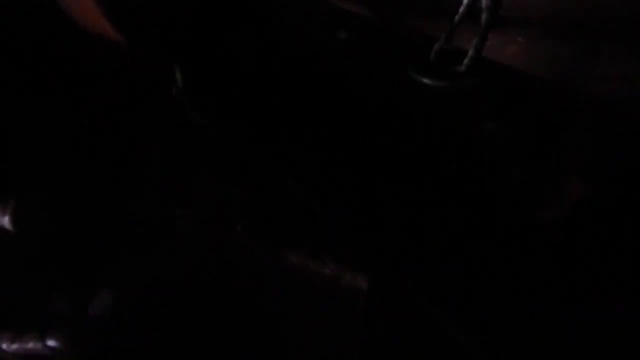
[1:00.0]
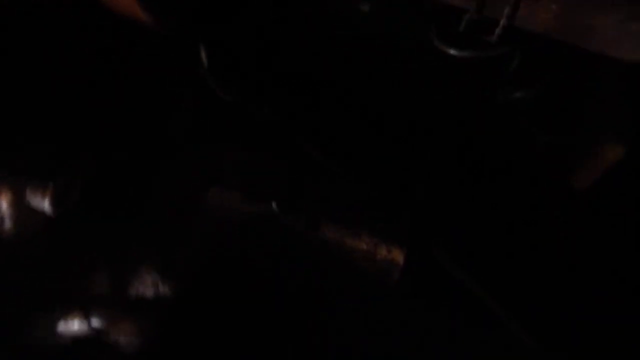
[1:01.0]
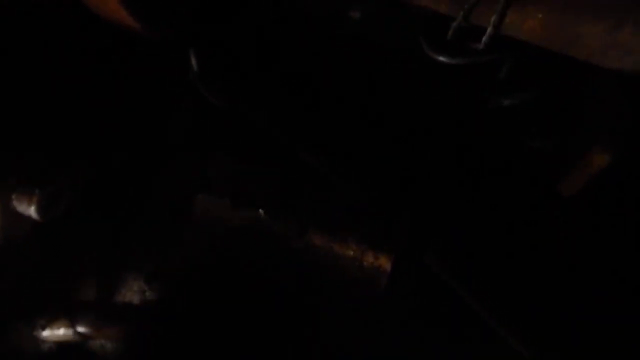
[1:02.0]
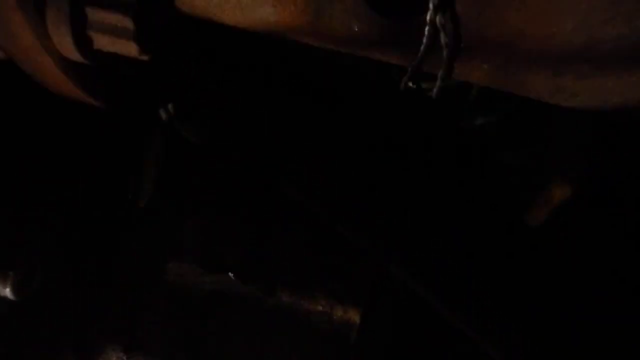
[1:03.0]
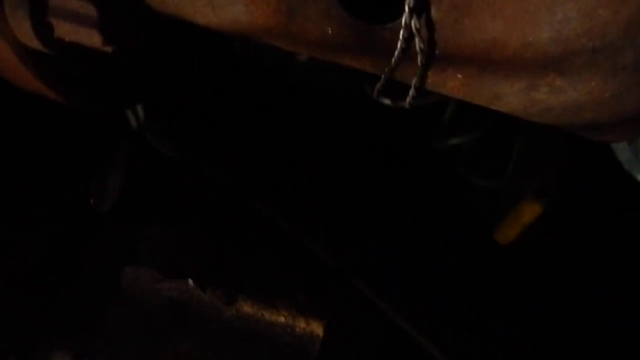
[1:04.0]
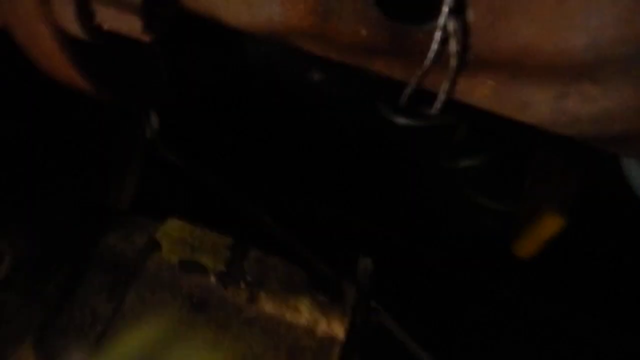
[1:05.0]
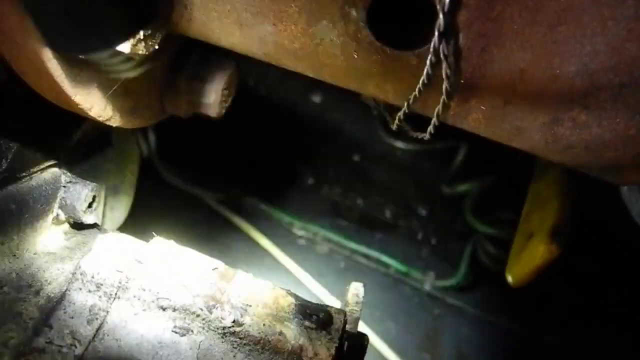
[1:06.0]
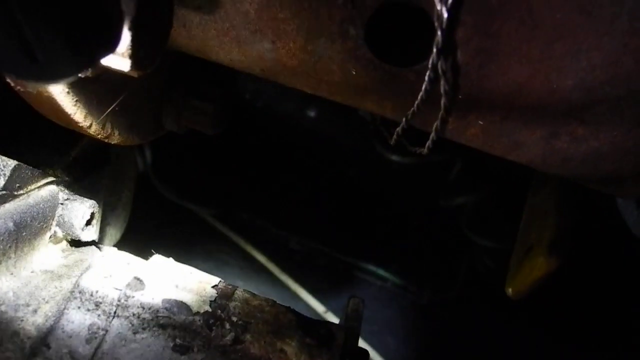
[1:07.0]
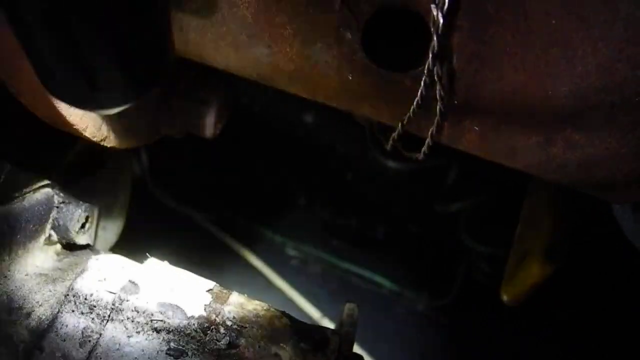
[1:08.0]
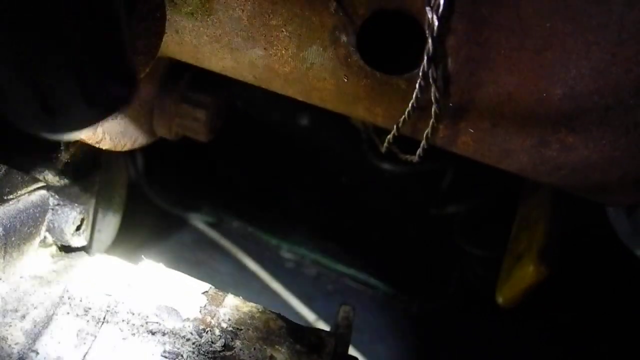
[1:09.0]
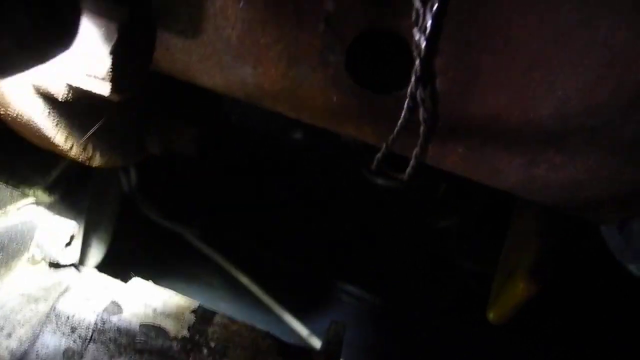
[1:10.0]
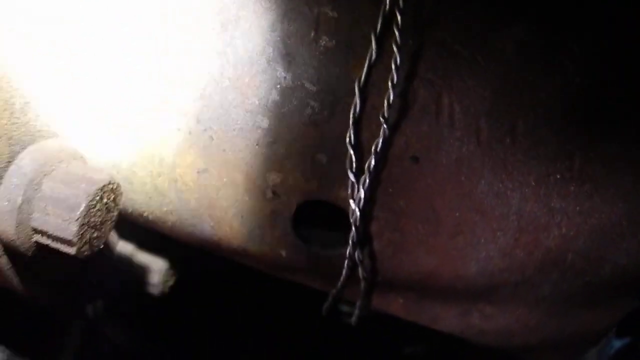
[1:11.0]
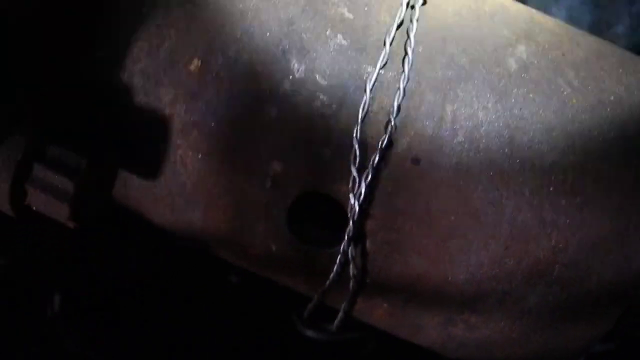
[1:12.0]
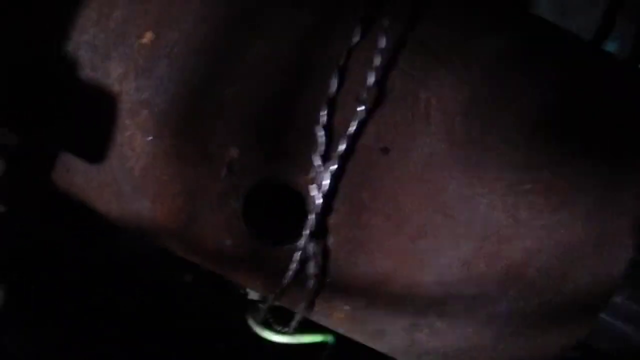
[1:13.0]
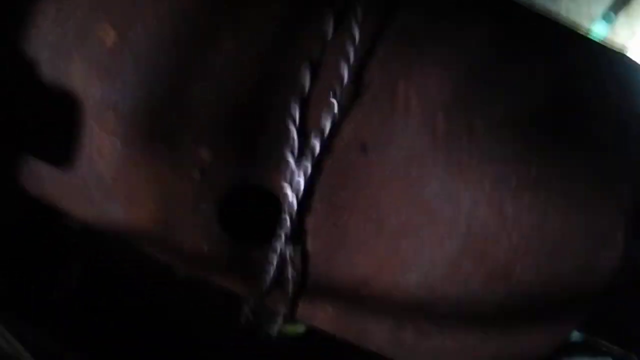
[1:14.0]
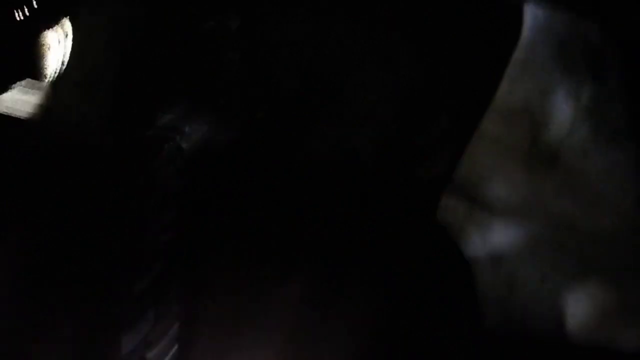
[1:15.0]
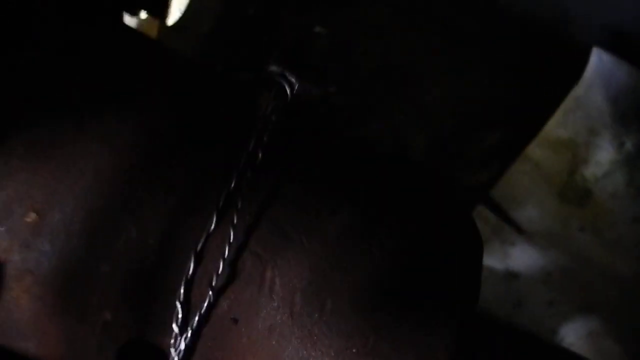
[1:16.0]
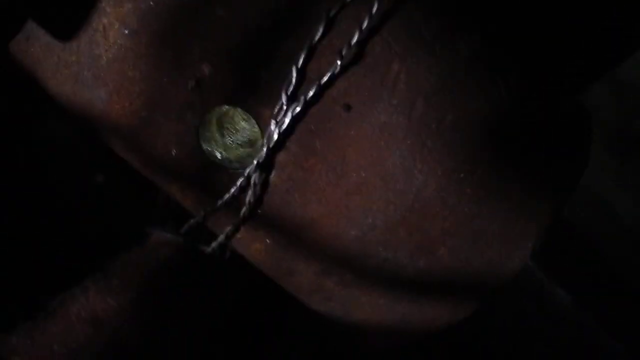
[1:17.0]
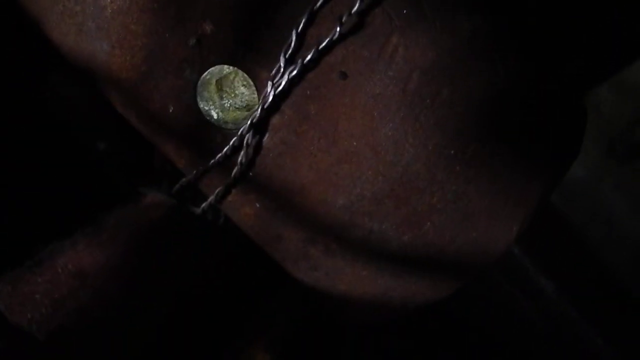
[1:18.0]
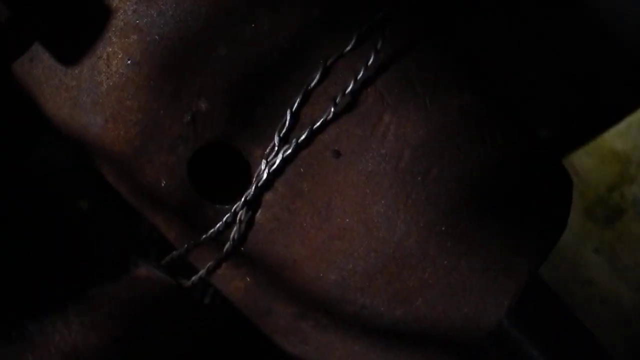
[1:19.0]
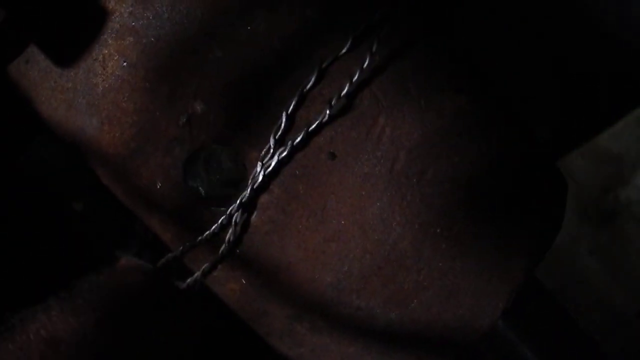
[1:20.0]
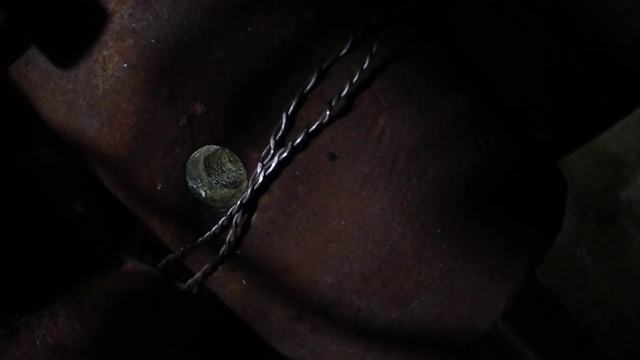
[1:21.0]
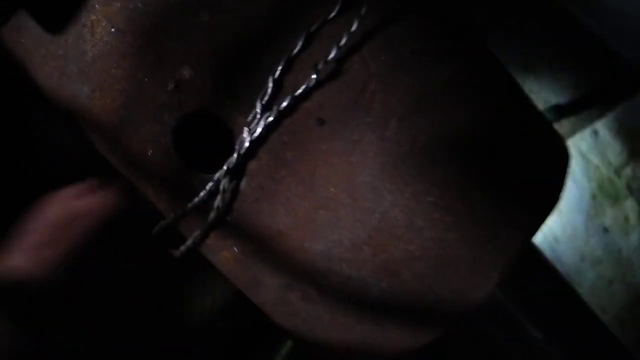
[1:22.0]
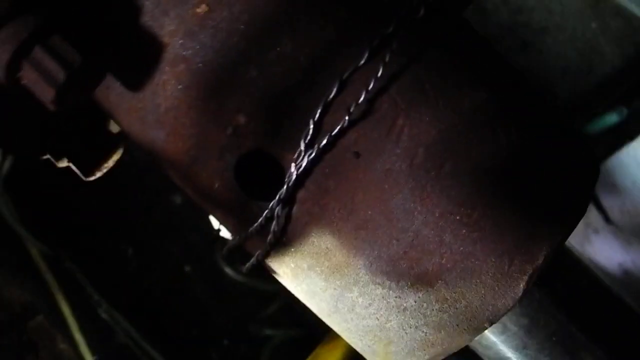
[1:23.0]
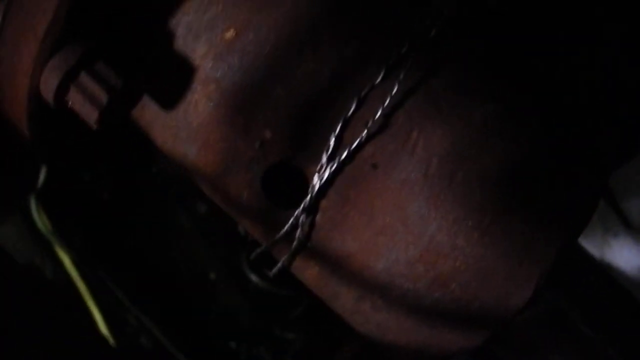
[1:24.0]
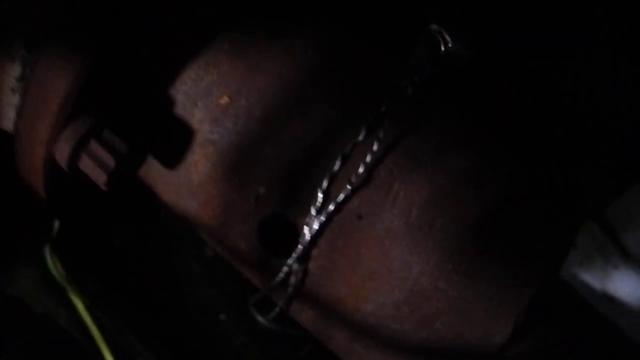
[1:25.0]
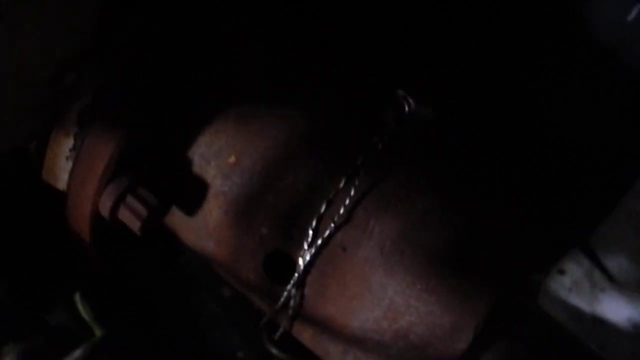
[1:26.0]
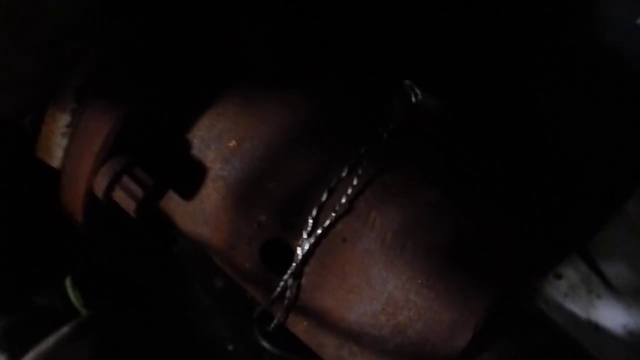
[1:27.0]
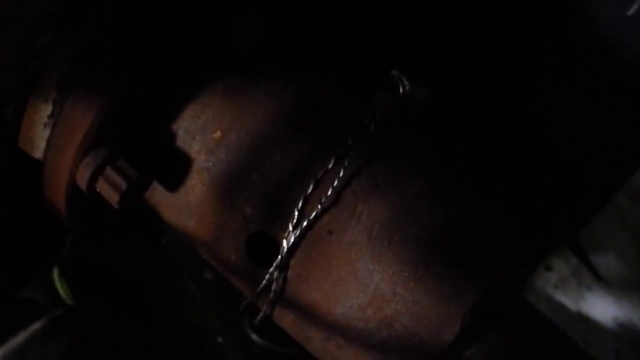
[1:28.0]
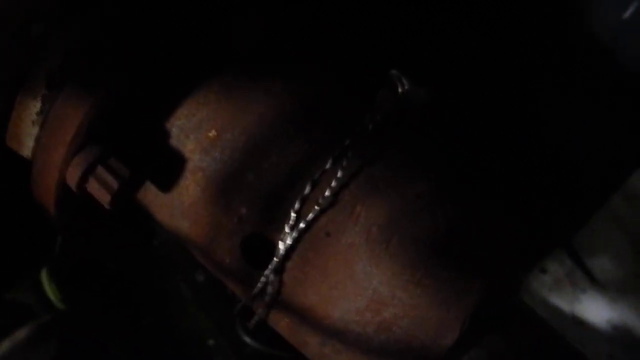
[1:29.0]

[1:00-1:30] The screen is at first mostly black and little can be seen, apart from a rusty metal thing at the top of the screen. Then a light comes on and shines down into a crevice; the small black flashlight is at the top left of the screen. The light shines back up to the rusty metal piece, which is cylindrical and has a silver piece of wire wrapped around it, apparently twice. There is a hole in the front of the cylindrical rusty metal piece. The camera shakes around. The flashlight seems to have gone to the other side of the piece, because light can be seen shining through the hole. The light goes away, then comes back. The person's hand is slightly visible on the left side of the screen. It pulls out, and the camera just looks at the rusty cylindrical piece of metal with the hole in it and the silver wire wrapped around it.